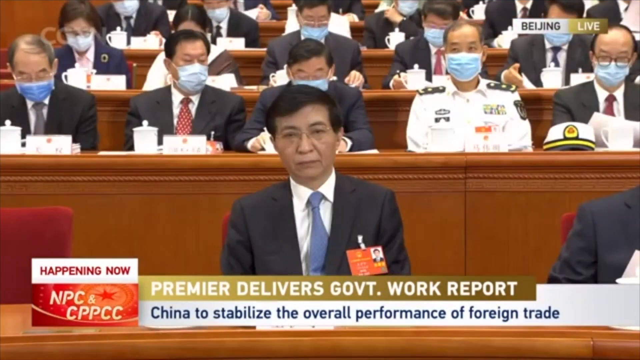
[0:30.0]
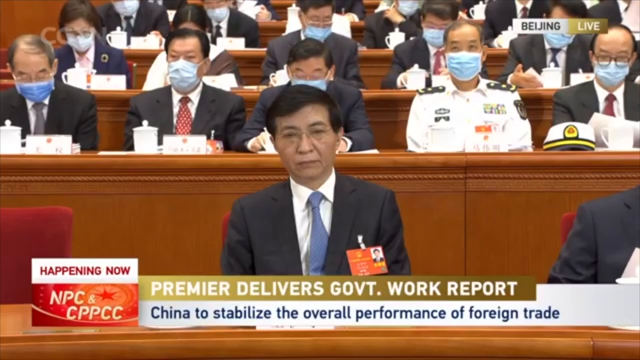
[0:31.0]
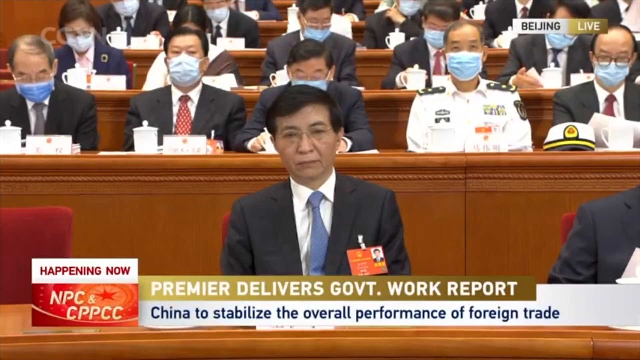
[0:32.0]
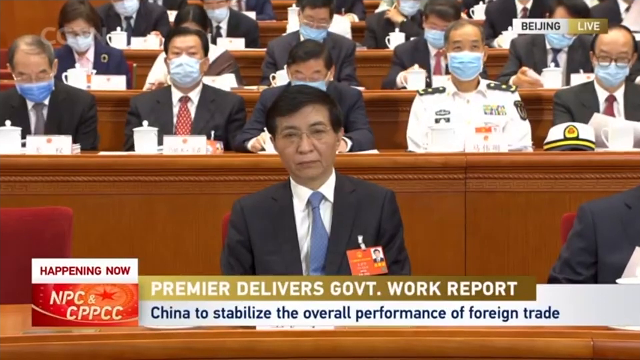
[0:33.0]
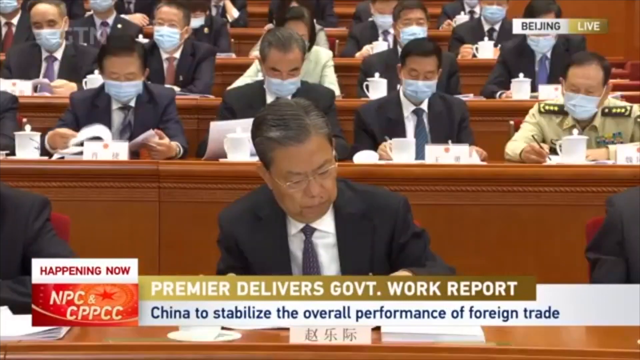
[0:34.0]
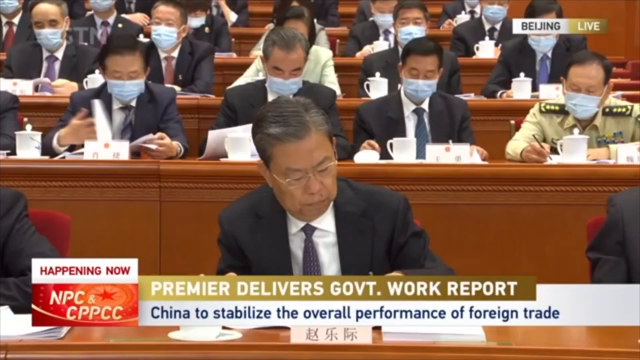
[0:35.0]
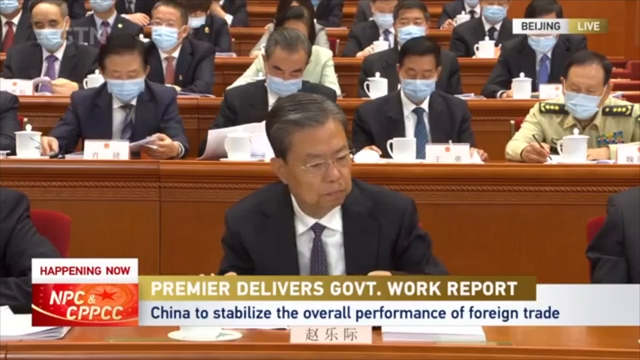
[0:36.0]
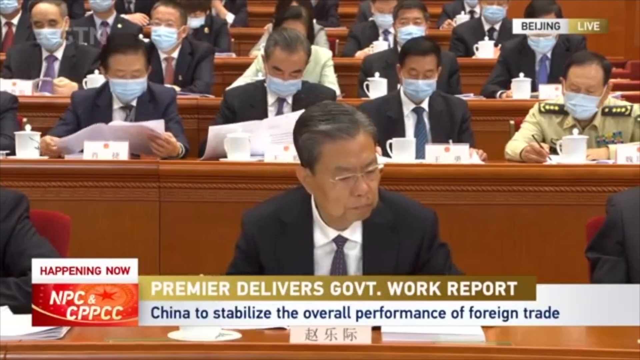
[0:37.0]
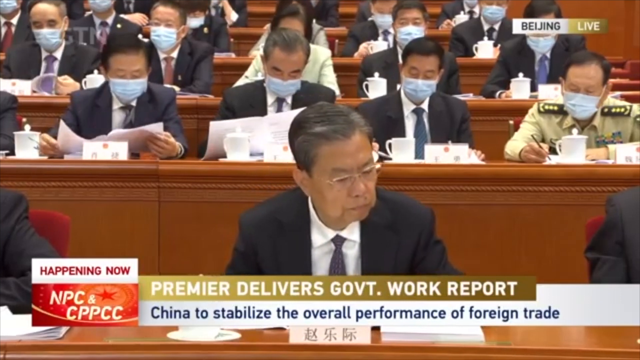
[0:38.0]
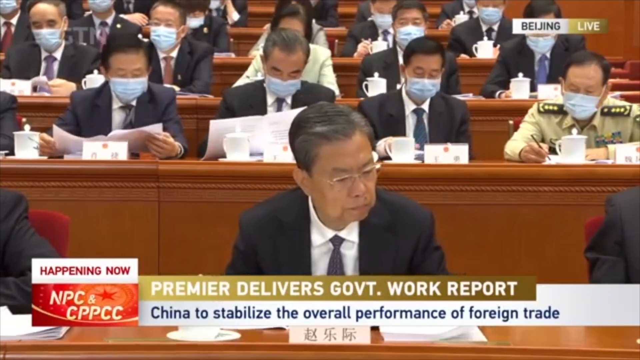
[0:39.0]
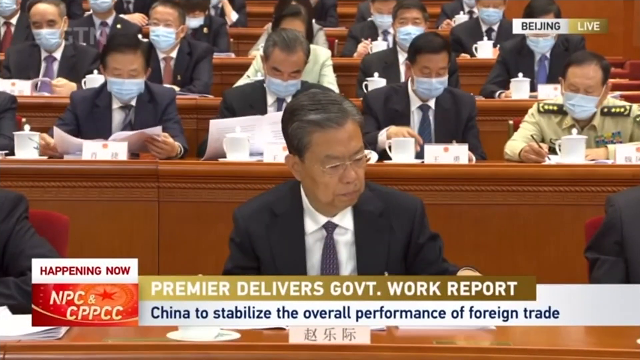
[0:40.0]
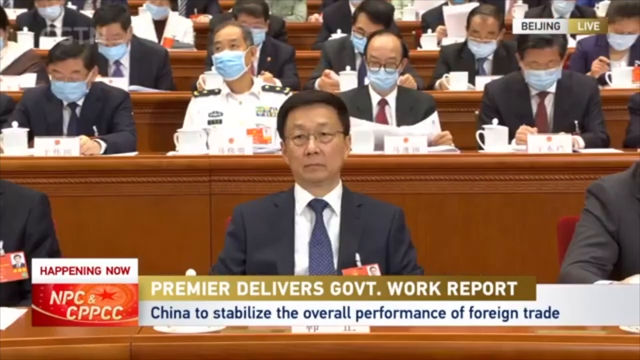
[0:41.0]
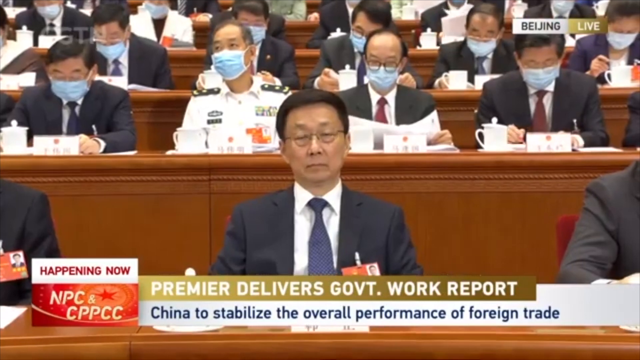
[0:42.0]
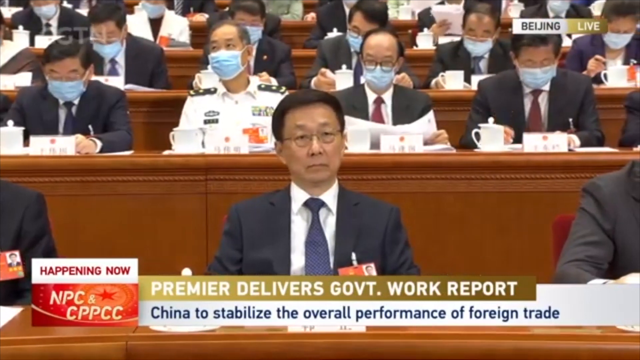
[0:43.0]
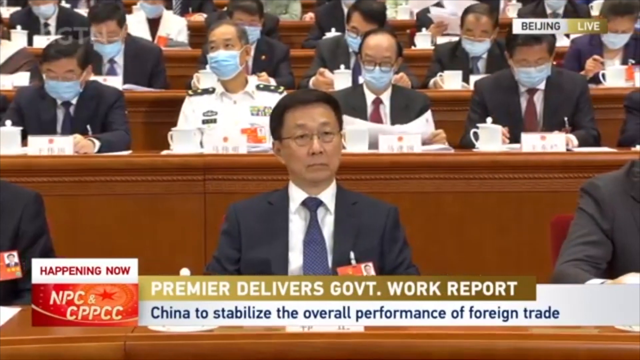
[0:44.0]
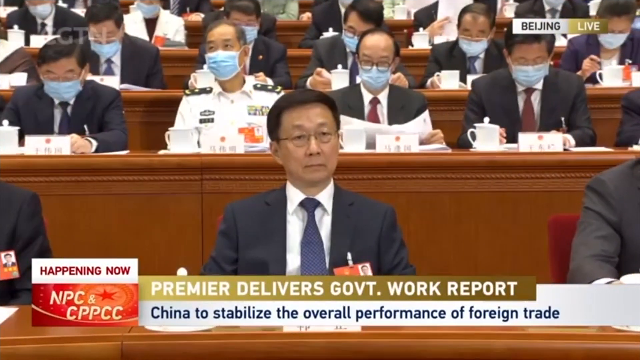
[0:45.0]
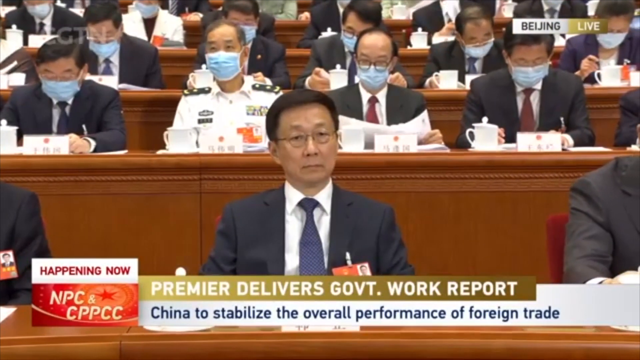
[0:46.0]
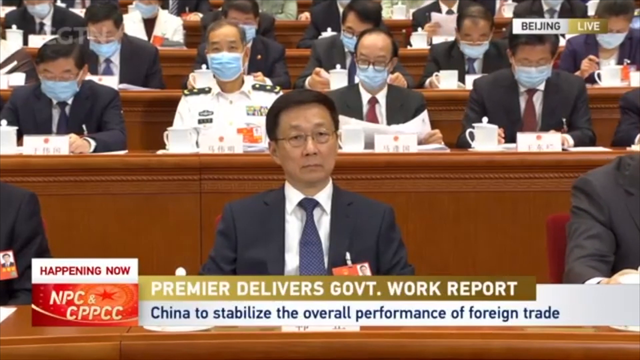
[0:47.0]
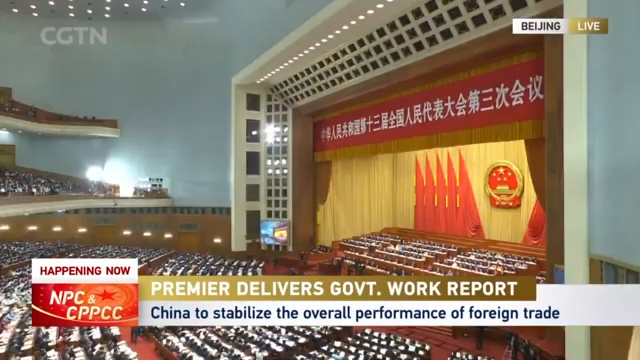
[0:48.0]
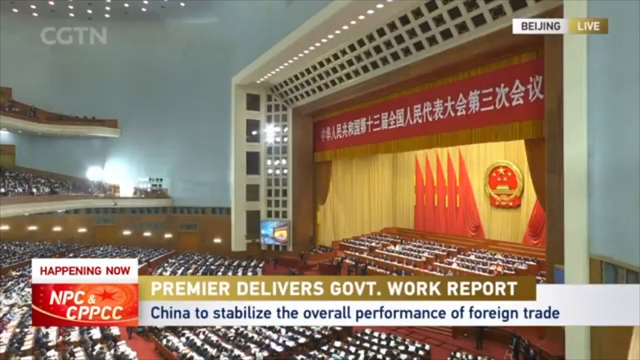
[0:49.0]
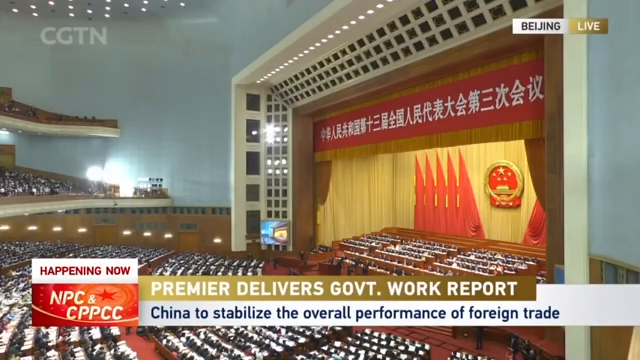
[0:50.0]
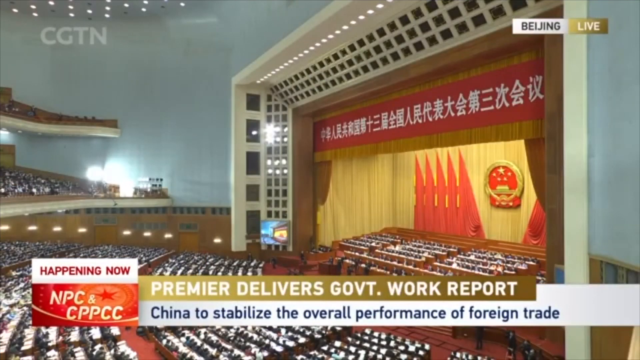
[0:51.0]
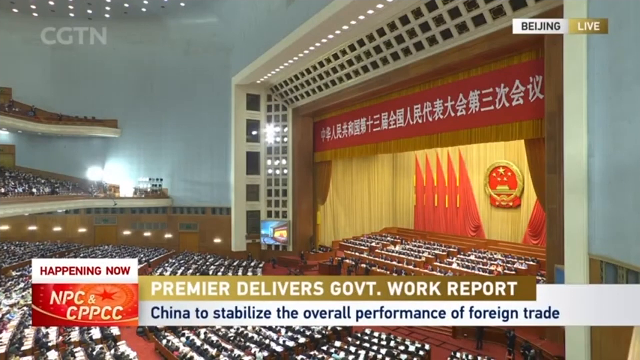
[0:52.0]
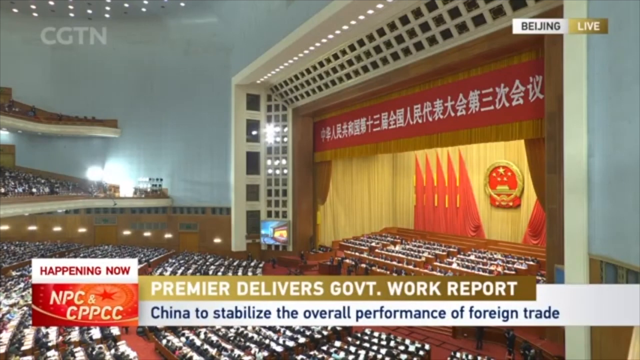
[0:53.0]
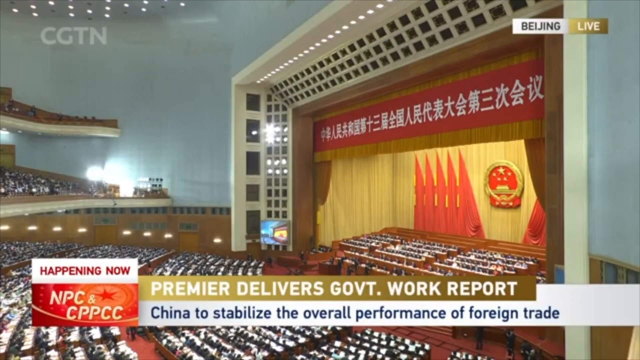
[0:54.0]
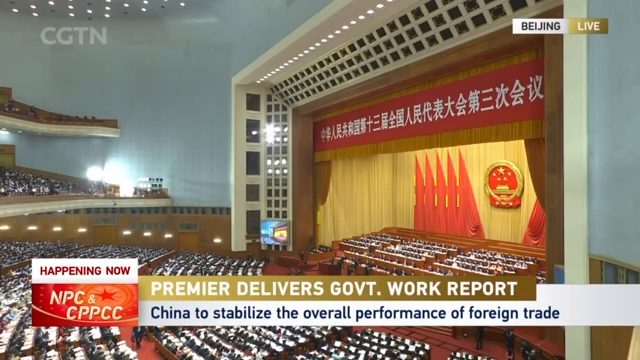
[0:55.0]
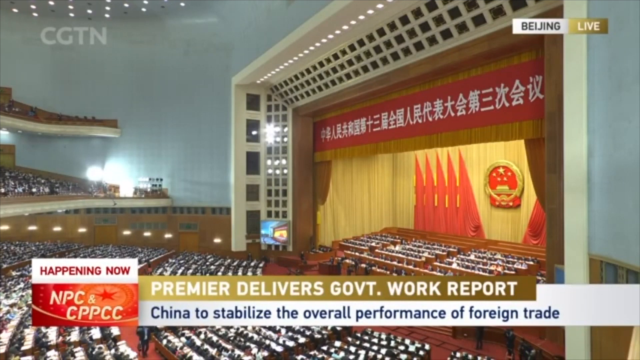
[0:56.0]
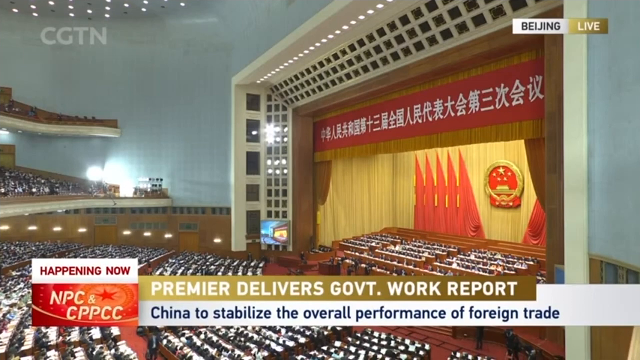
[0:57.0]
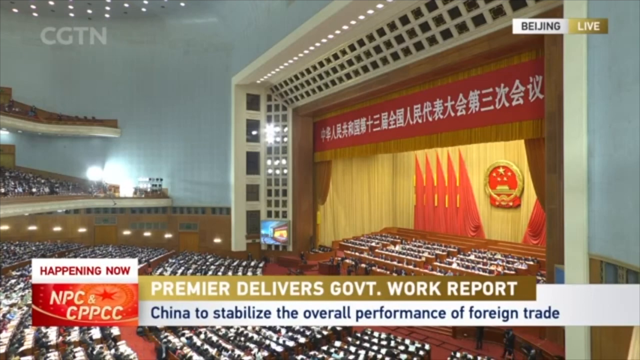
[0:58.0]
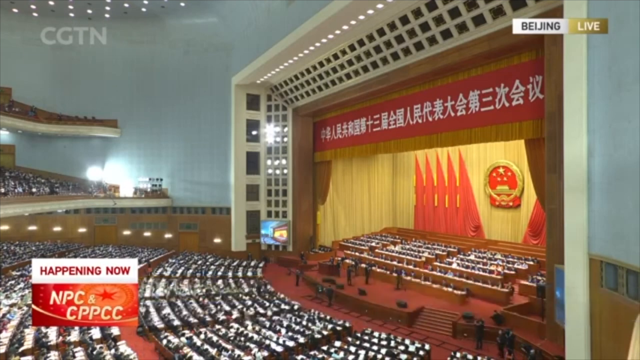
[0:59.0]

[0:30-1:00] The skinnier gentleman appears in a blue tie and black suit. The lower third still reads "Premier delivers government work report", while the text underneath changes to "China to stabilize the overall performance of foreign trade". The camera pans to an older, more heavyset gentleman with glasses, who seems to be looking down at pieces of paper. Multiple people in the background wear masks with a lighter blue look. Next comes another gentleman with glasses, a bluish tie and a black suit. The view then pulls out to show the stadium and how big it is, with everybody in the audience visible. On the left side the seating is more arced, facing toward the front of the stage. Various seating places at the front of the stage indicate that these people are more prominent in the Chinese government. A red banner with white Chinese lettering hangs above the stage, and yellows and oranges make up the curtains behind the stage.